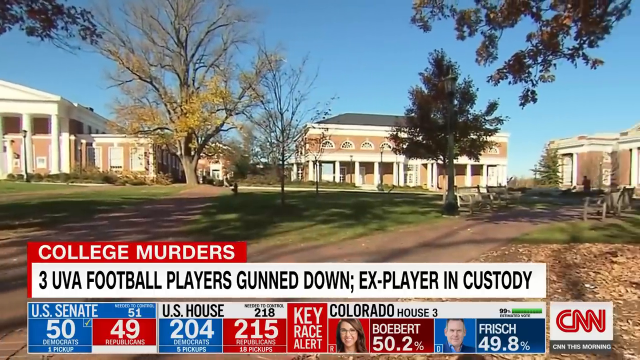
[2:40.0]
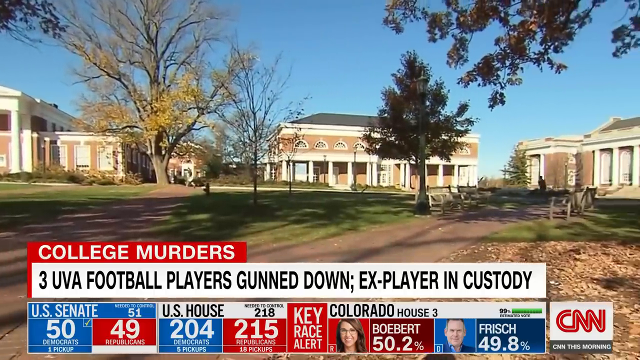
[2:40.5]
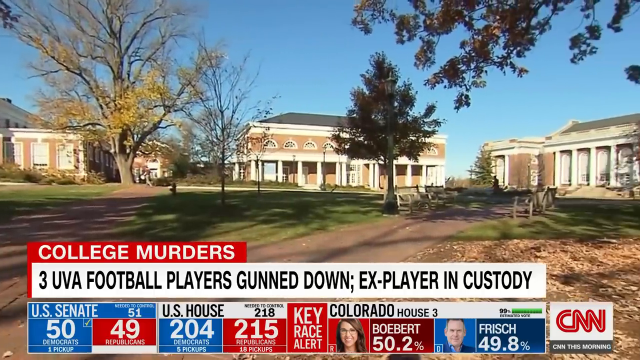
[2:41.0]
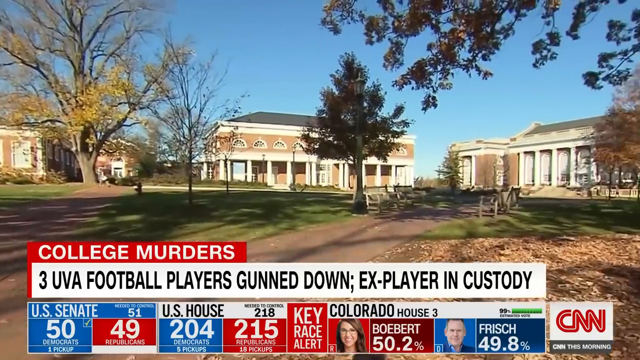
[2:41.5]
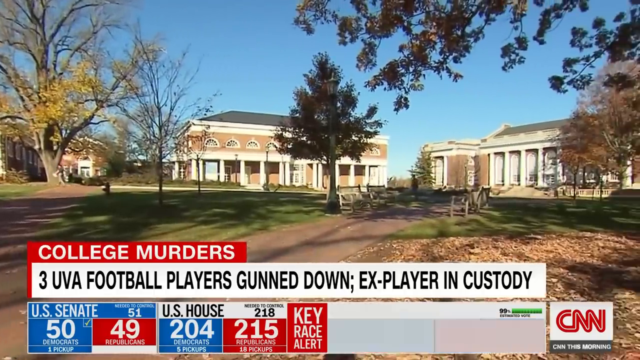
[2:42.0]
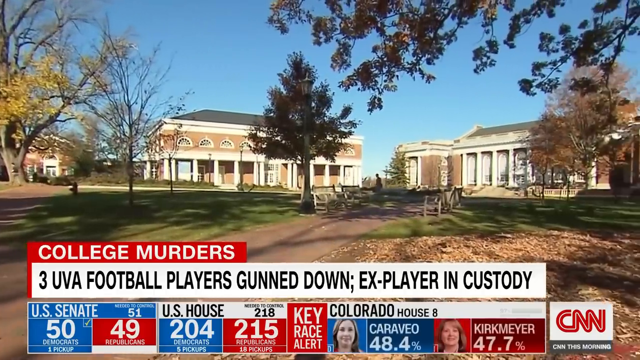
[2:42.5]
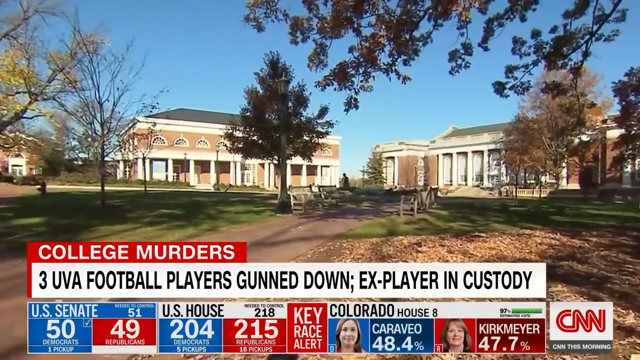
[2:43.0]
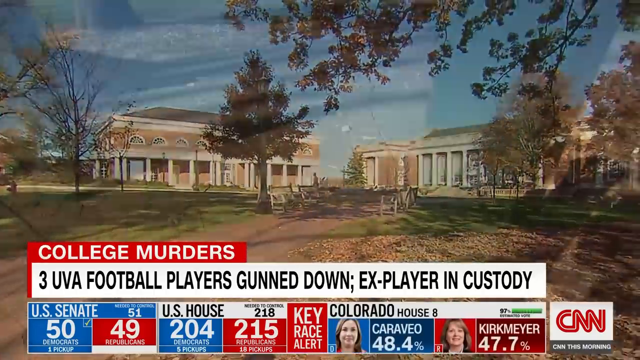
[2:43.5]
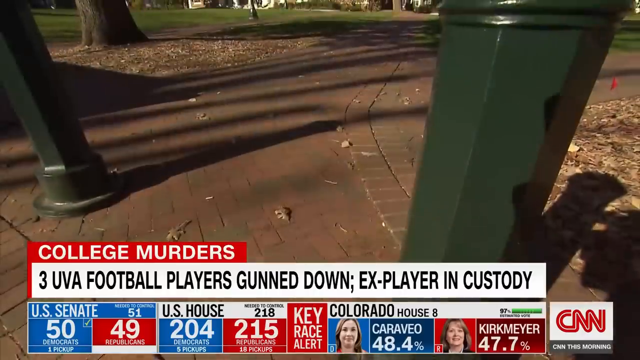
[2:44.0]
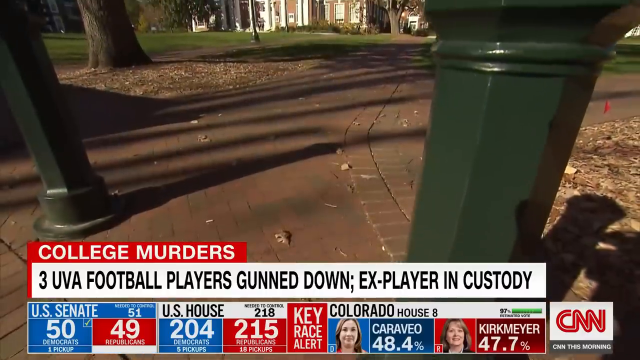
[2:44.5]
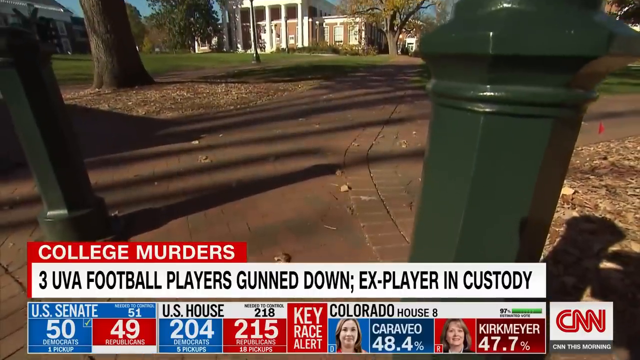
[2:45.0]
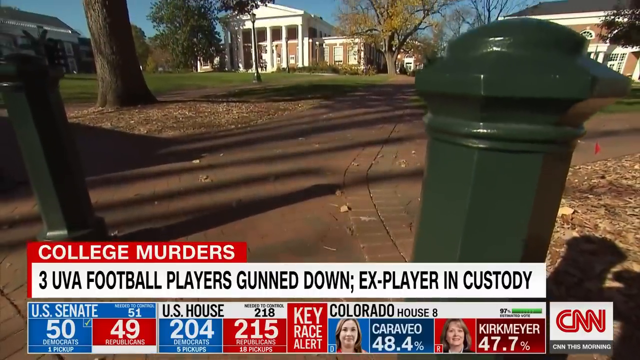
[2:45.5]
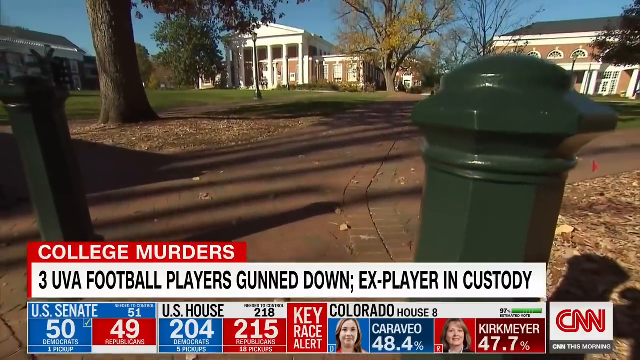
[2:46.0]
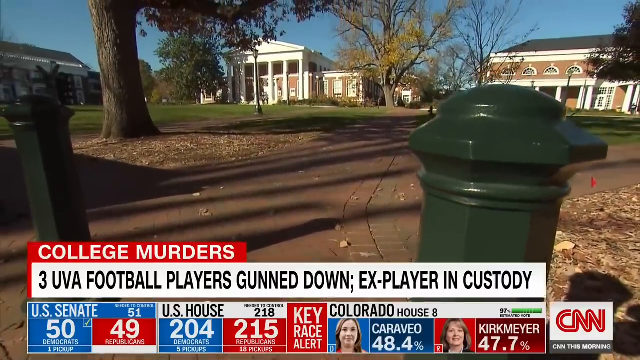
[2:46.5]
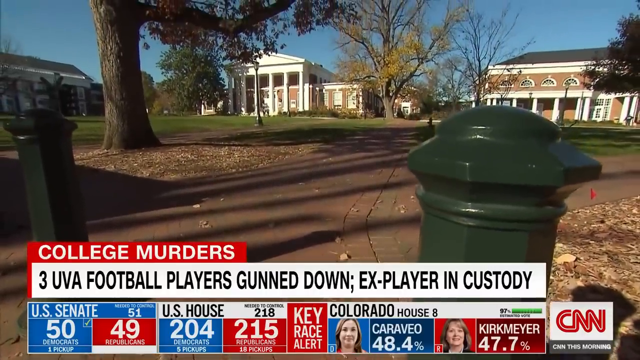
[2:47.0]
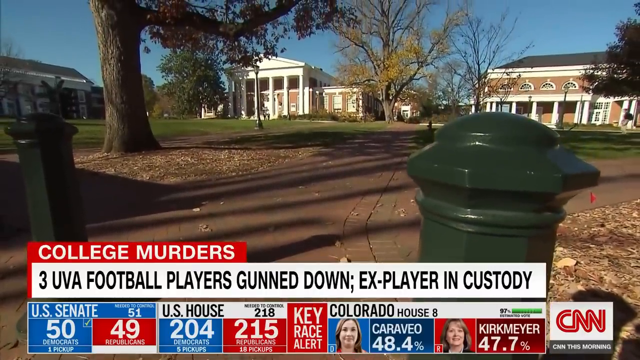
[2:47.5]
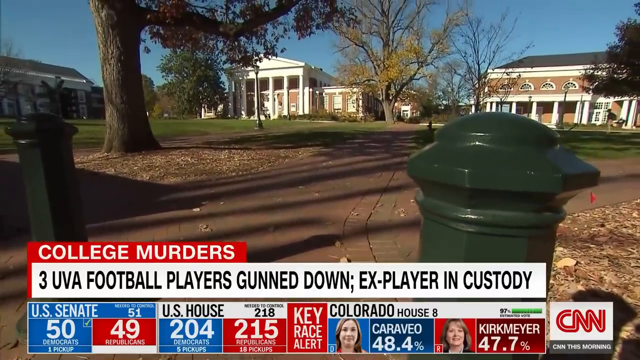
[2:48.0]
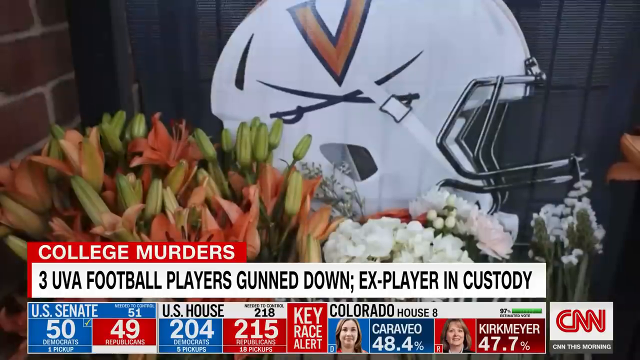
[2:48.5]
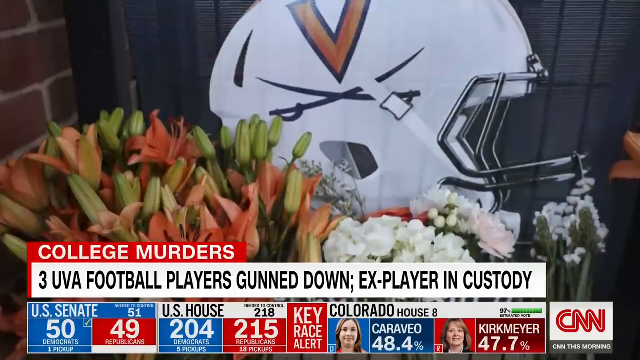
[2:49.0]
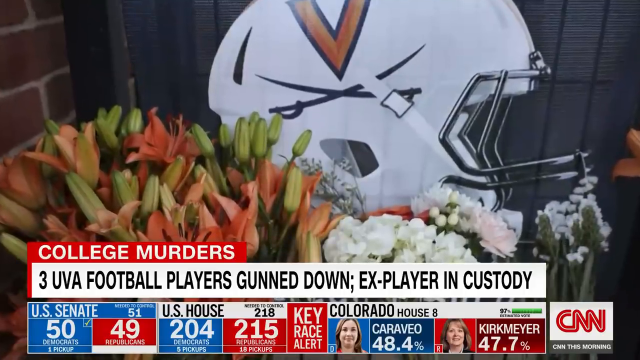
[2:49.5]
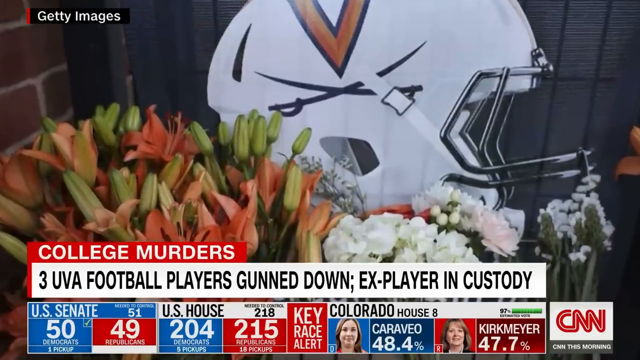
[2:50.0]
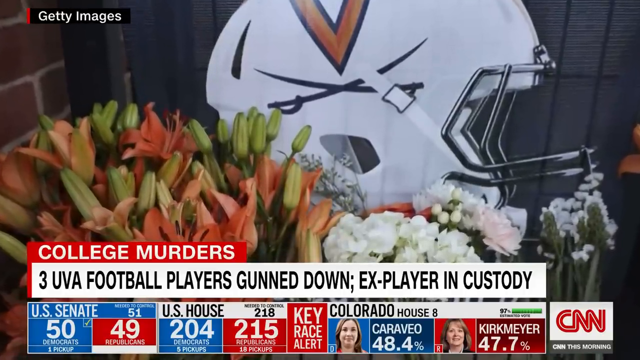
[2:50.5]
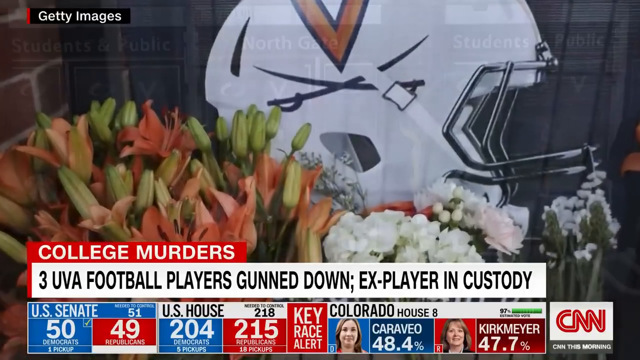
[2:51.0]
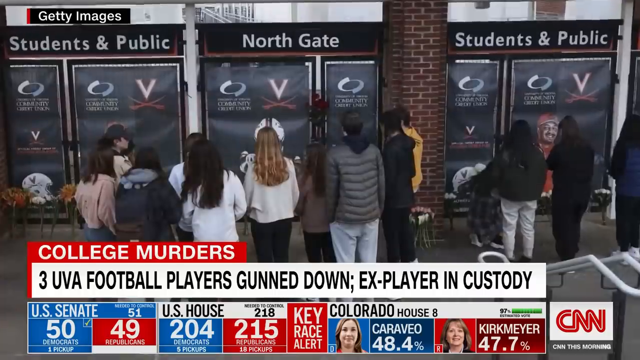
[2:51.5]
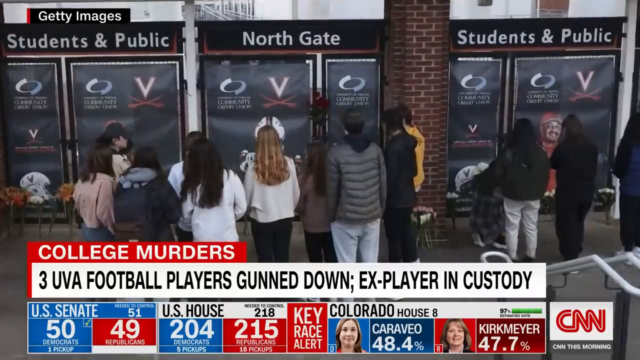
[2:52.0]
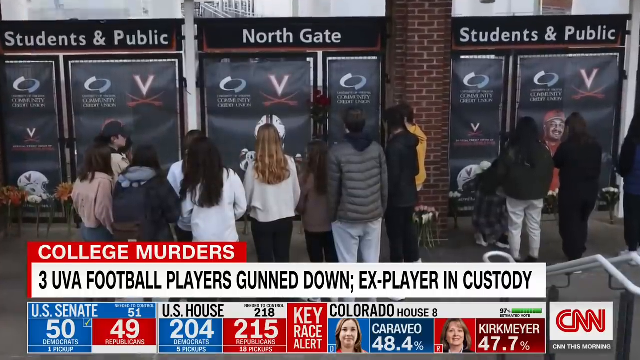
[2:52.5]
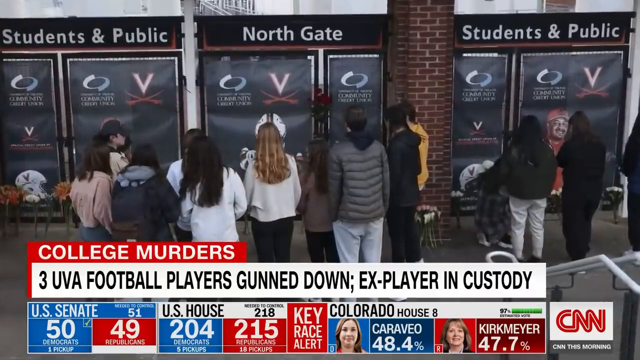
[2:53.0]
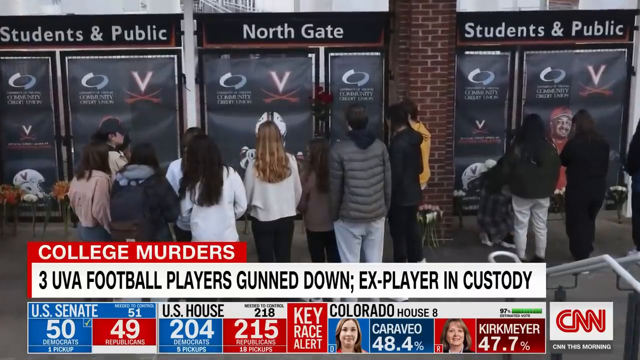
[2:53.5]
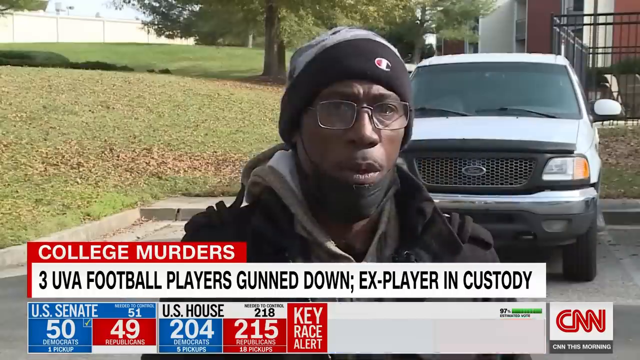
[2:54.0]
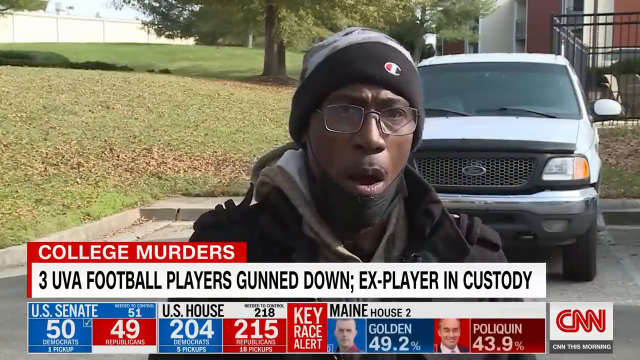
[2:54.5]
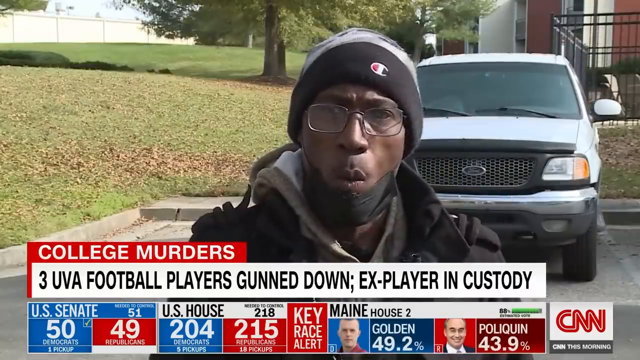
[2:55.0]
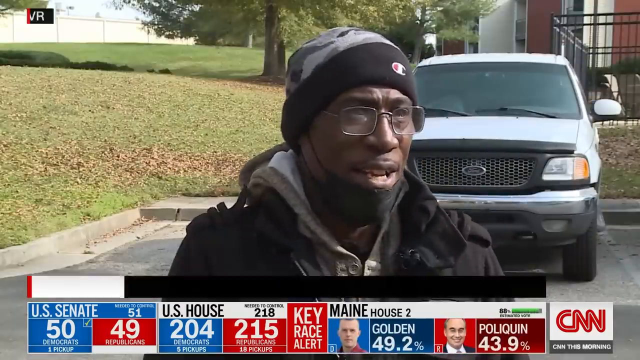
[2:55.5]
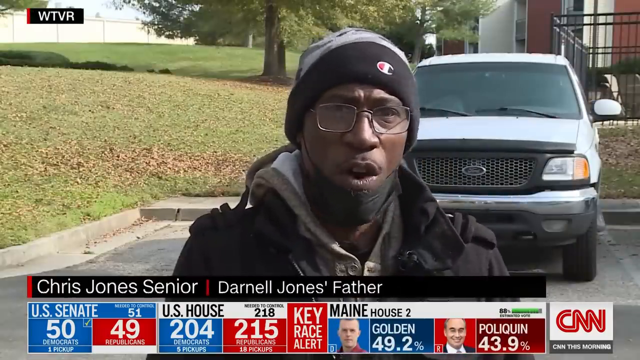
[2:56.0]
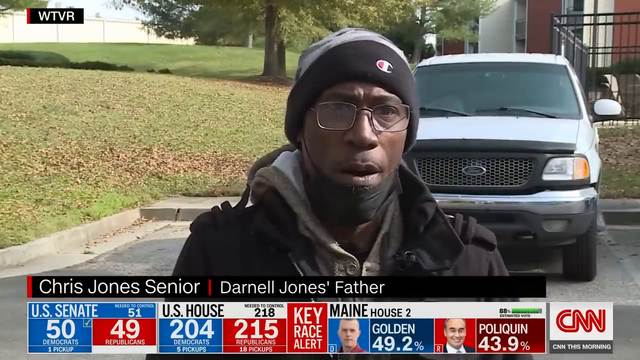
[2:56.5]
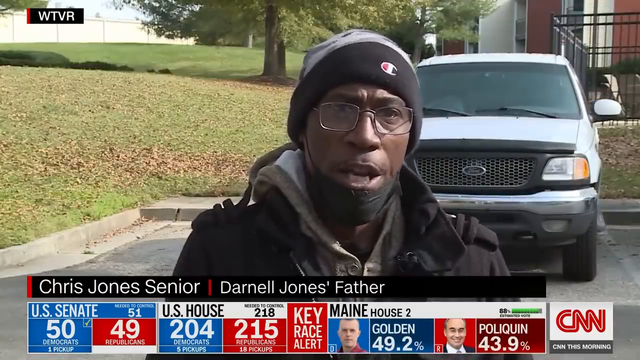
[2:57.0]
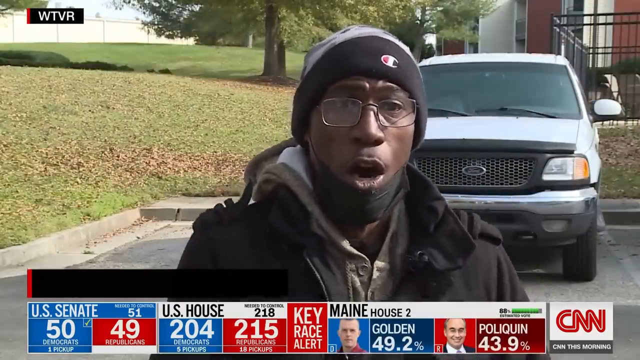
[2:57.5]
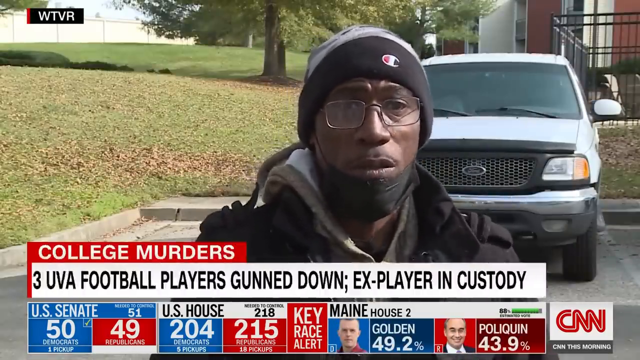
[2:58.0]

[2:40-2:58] CNN's coverage of the murder of three UVA college football players, gunned down by an ex-player who is now in police custody, shows images of the University of Virginia campus. The campus has historic buildings with white porticos and red brick arched windows, and the gardens are paved with red brick, with a lot of lawn, lampposts and greenery in the college's main courtyard. Other footage captures large bunches of fresh cut flowers left in tribute to the three players, placed in front of the sports area on campus called Northgate, where a group of fellow students mill around paying their respects, reading notes or leaving notes and flowers. There is also footage of a man named Chris Jones Sr, Darnell Jones's father, giving an interview to CNN. He is an African American man wearing glasses and a beanie with the Champion logo in the center of the headband, and he has pulled his black mask down to uncover his mouth.